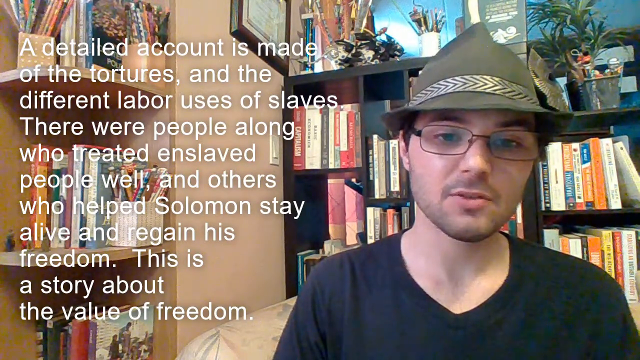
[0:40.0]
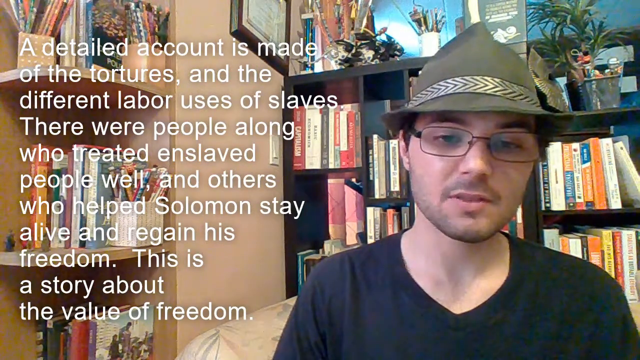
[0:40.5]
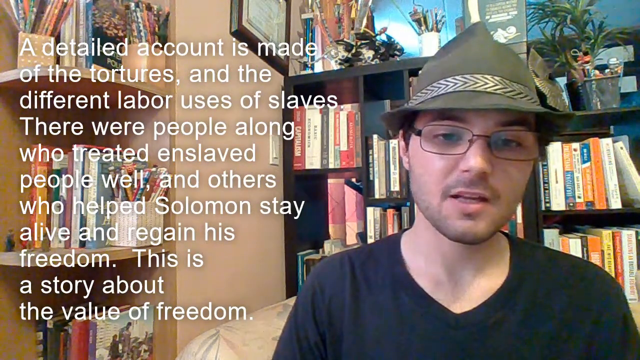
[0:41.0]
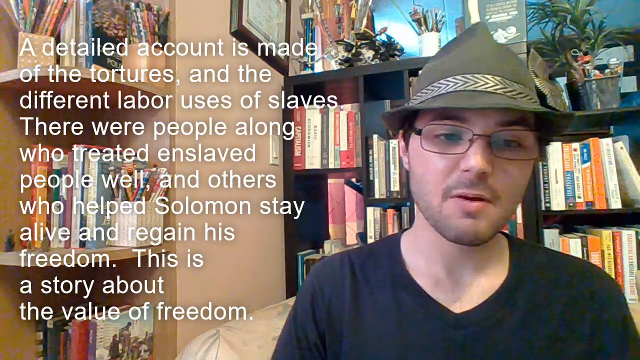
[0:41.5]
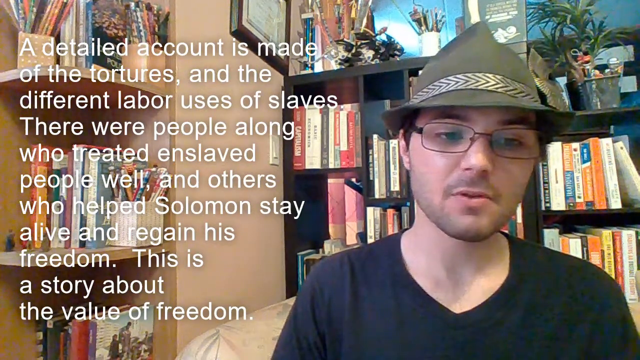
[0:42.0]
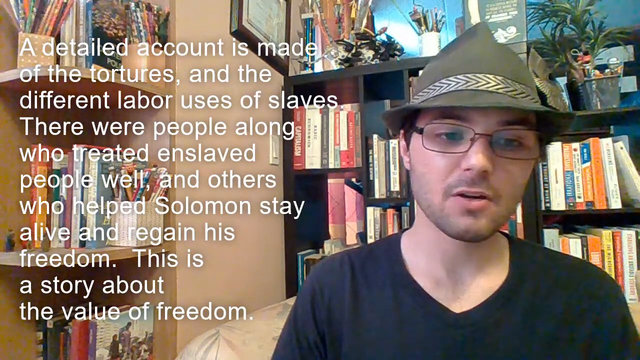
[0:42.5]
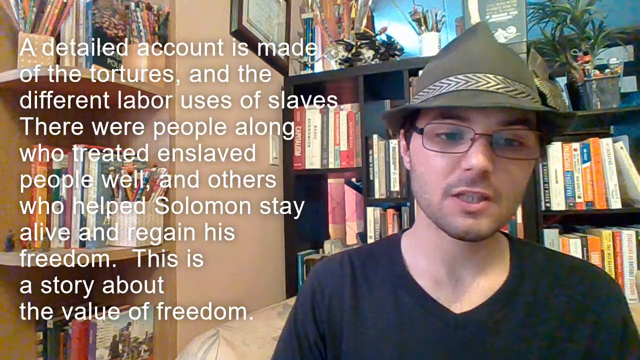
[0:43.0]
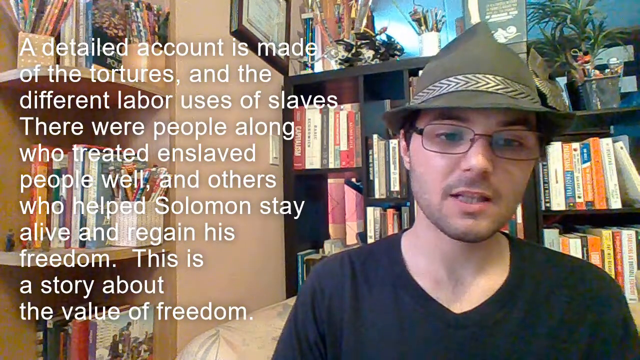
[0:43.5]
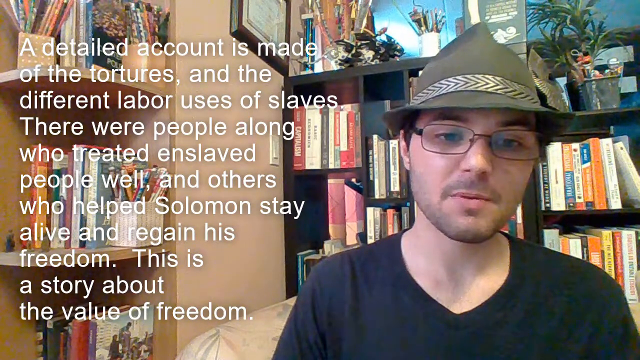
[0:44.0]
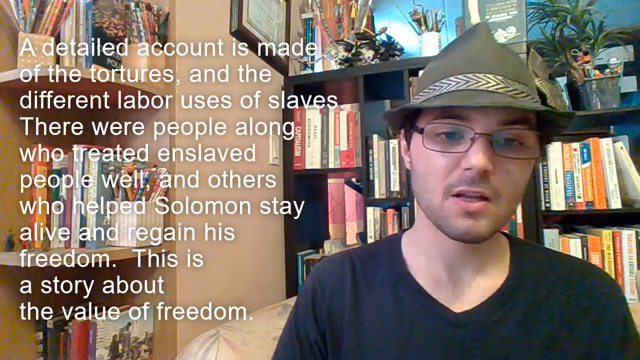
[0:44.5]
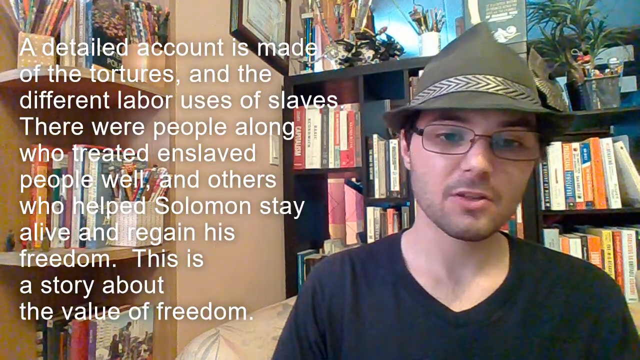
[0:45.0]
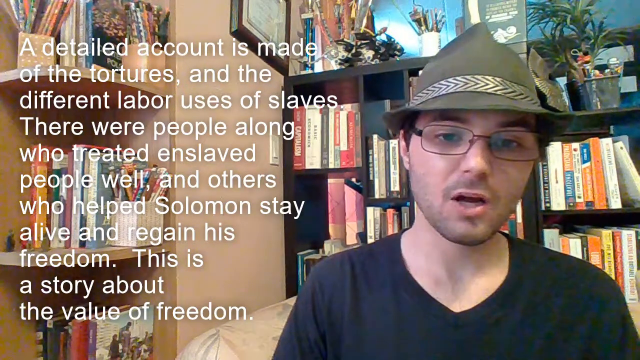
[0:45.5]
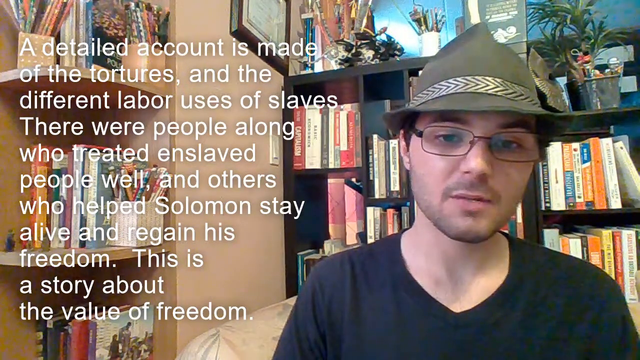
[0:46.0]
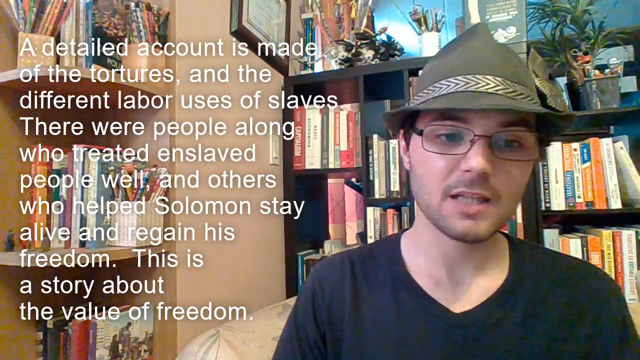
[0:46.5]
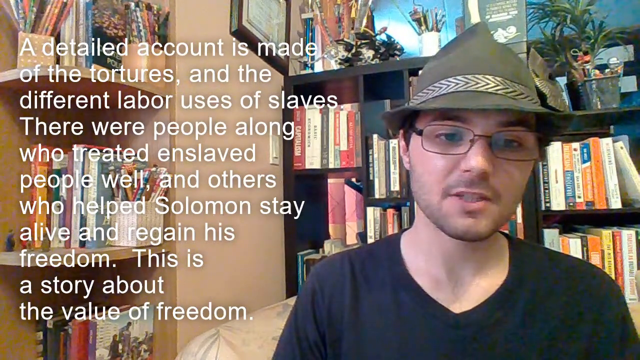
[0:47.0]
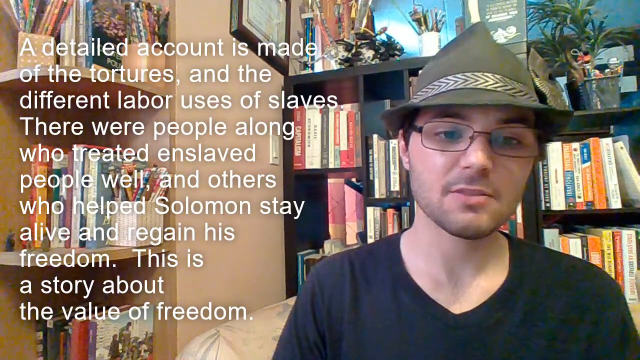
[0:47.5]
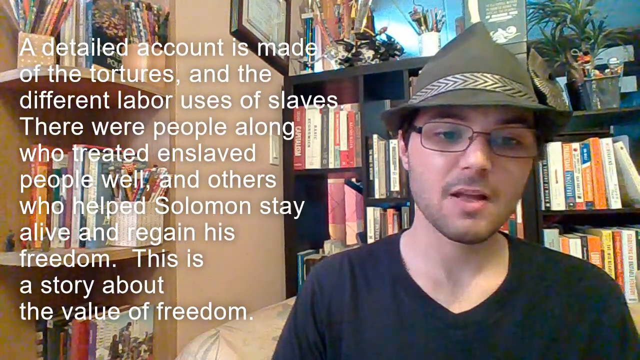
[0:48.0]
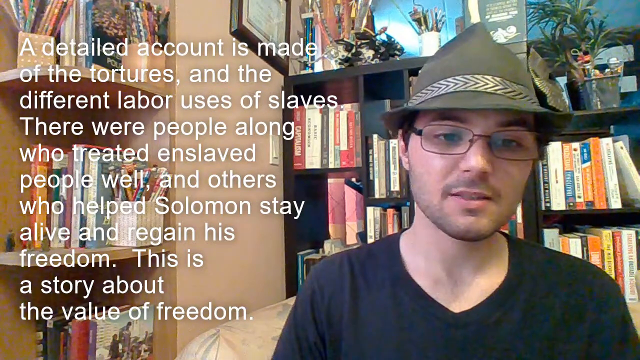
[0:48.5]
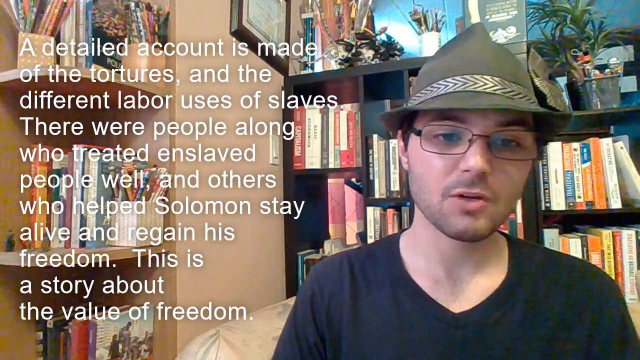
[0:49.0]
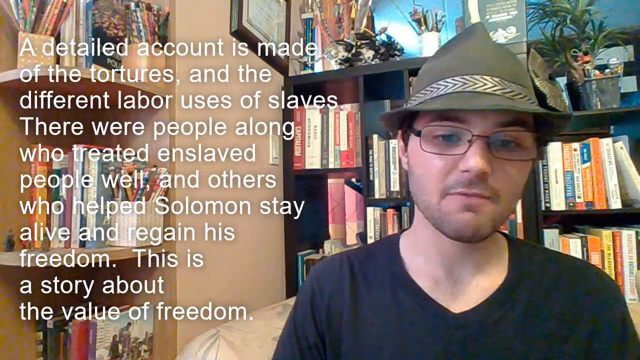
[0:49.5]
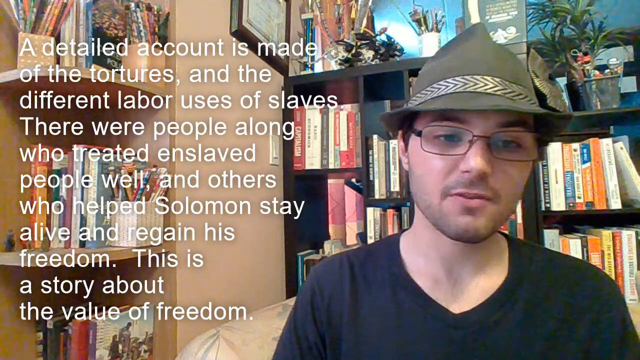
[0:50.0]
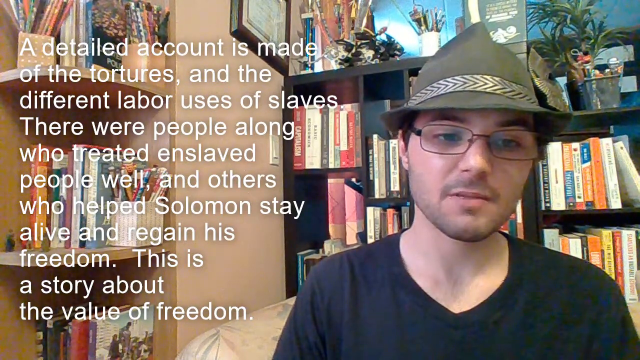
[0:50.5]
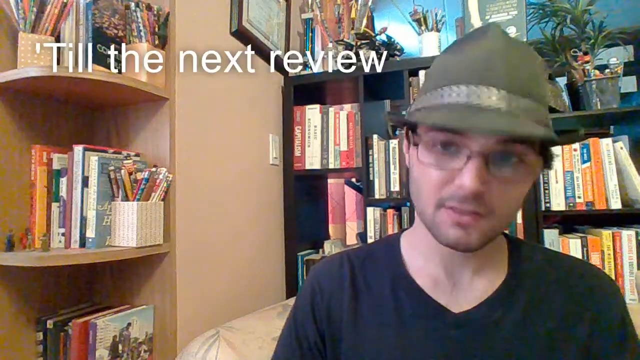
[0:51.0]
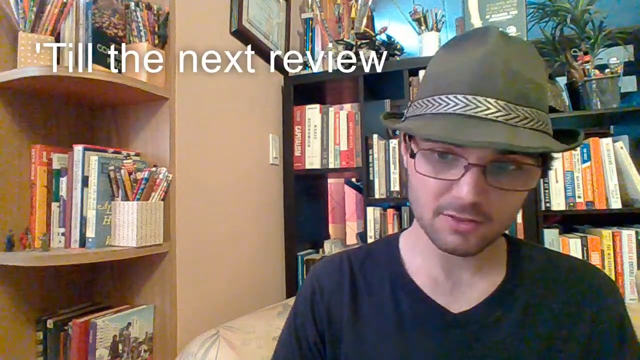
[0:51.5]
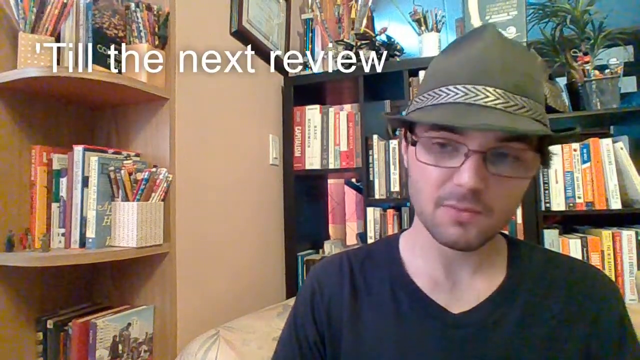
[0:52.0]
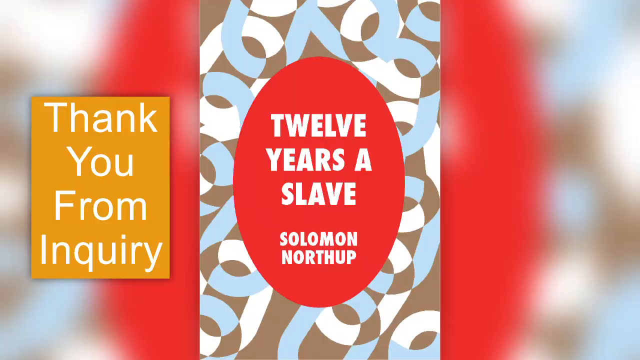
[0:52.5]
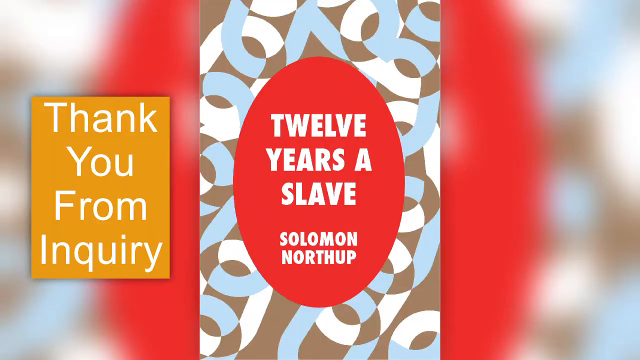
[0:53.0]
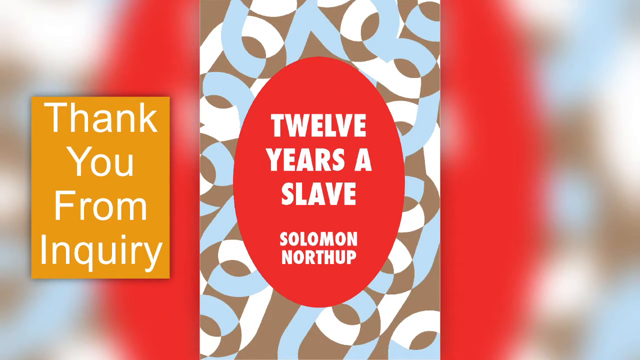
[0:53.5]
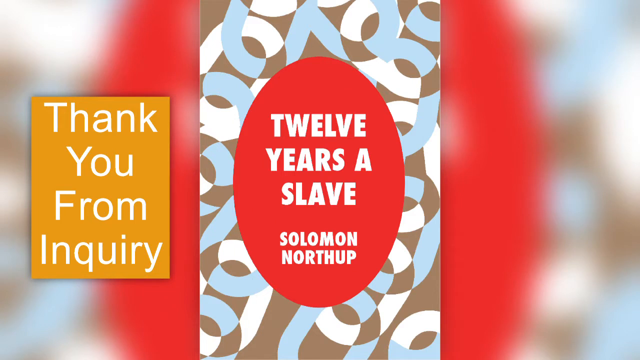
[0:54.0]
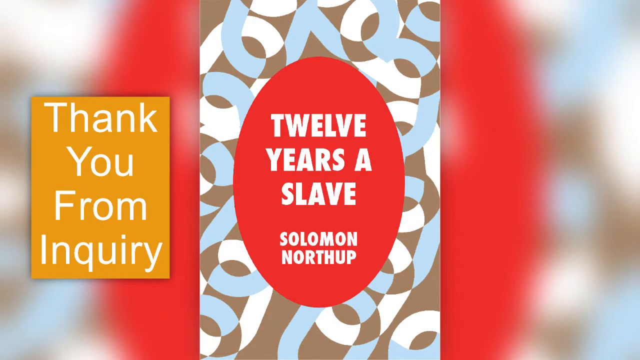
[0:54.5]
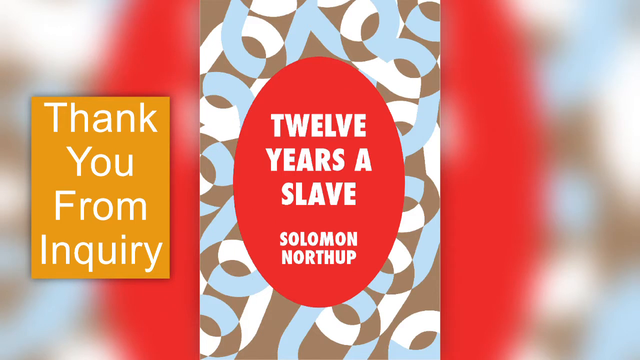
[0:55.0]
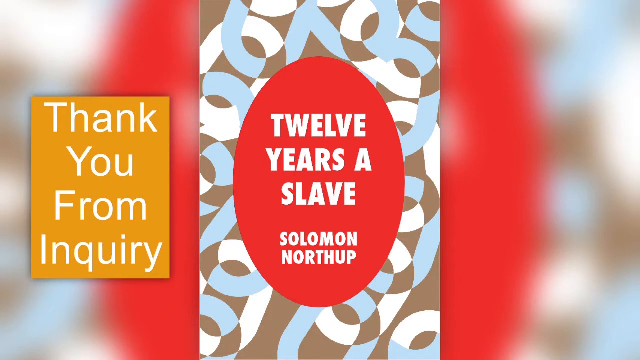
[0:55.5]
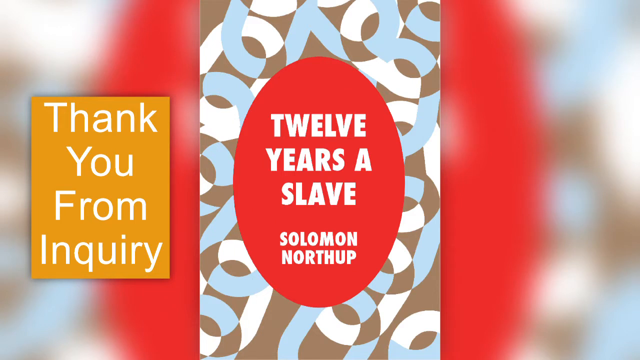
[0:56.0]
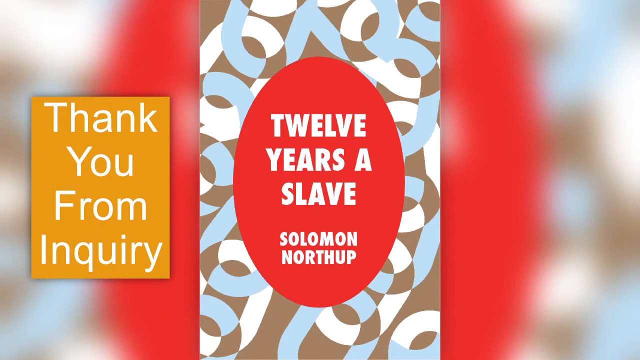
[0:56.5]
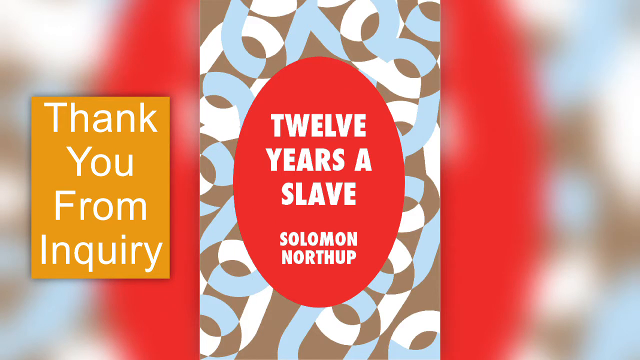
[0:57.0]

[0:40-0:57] The caption on the screen reads "a detailed account is made of the tortures and different labour uses of slaves. There were people along who treated enslaved people well and others who helped Solomon stay alive and regain his freedom. This is a story about the value of freedom." The text "till the next review" also appears. The YouTuber is a young man wearing a hat, glasses, and a dark blue shirt without a collar. He is filmed inside an office, with a bookcase holding many books in the background and a shelf or set of shelves on his right side with some stationery and books.